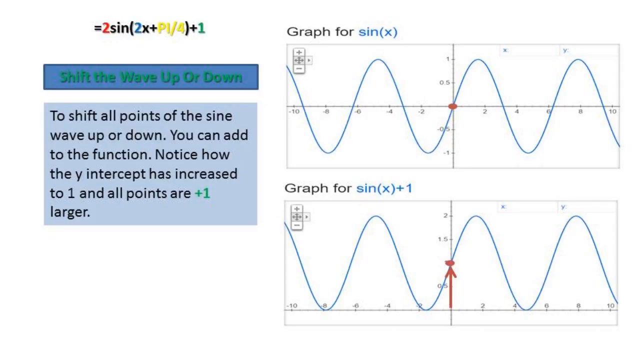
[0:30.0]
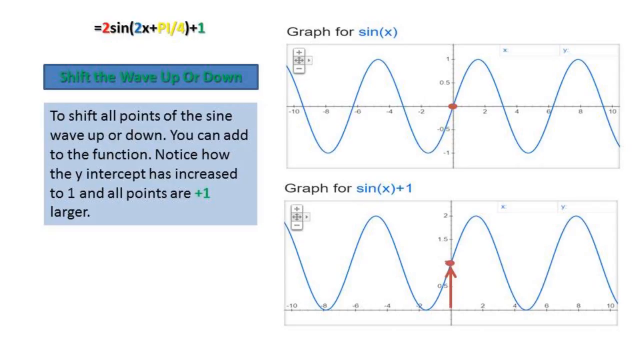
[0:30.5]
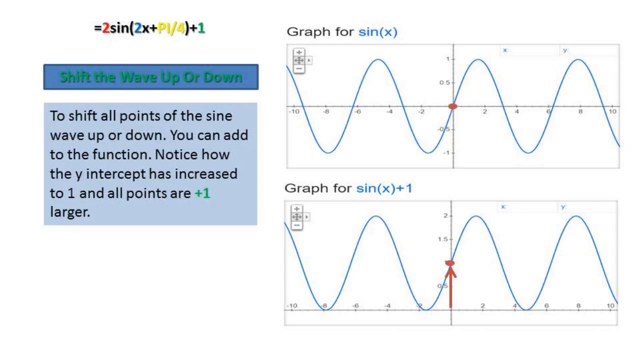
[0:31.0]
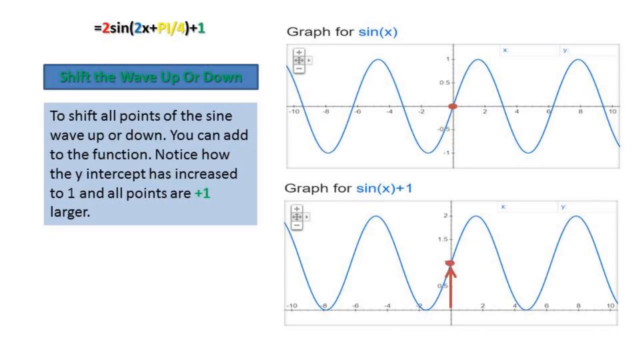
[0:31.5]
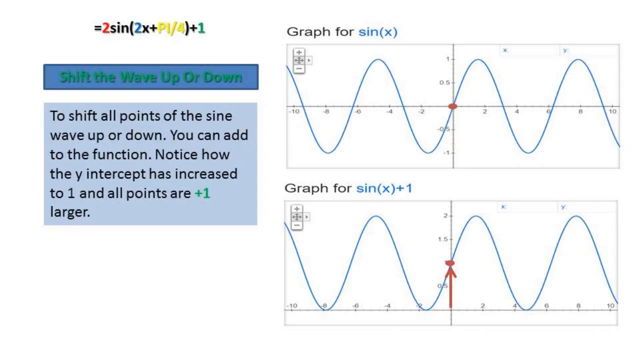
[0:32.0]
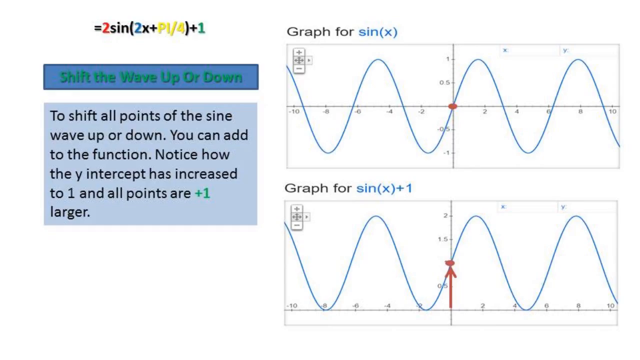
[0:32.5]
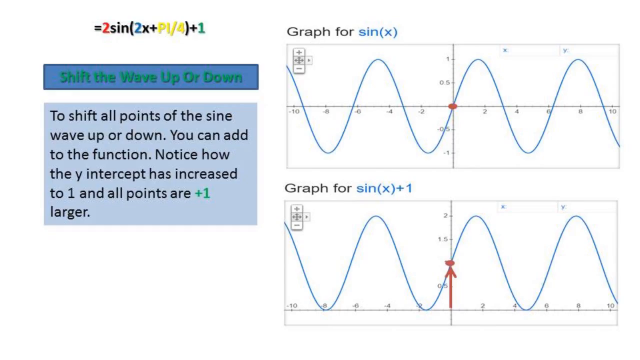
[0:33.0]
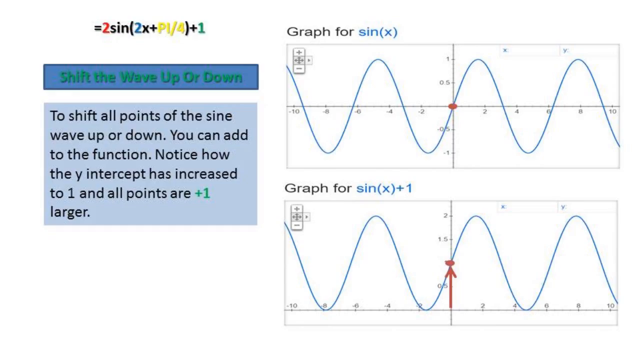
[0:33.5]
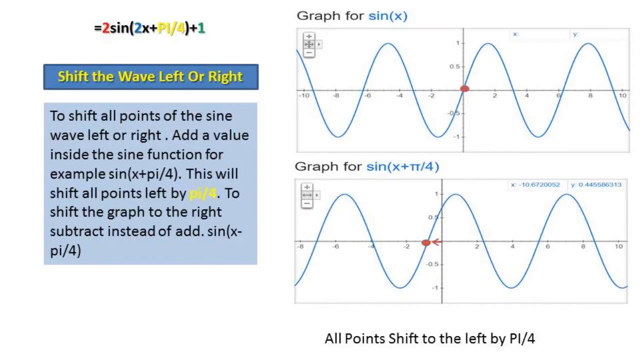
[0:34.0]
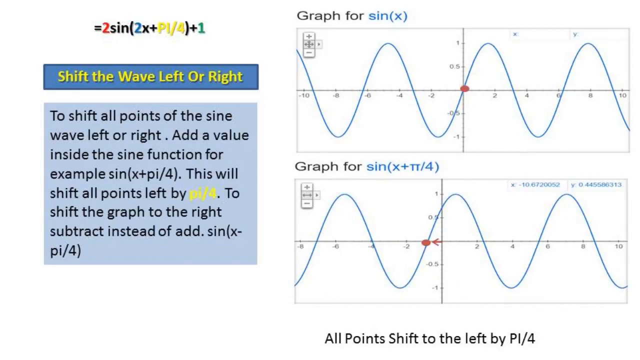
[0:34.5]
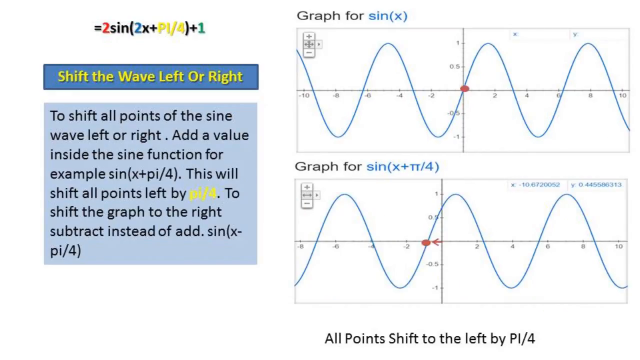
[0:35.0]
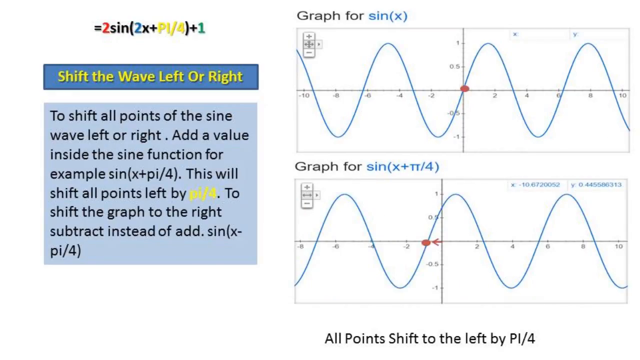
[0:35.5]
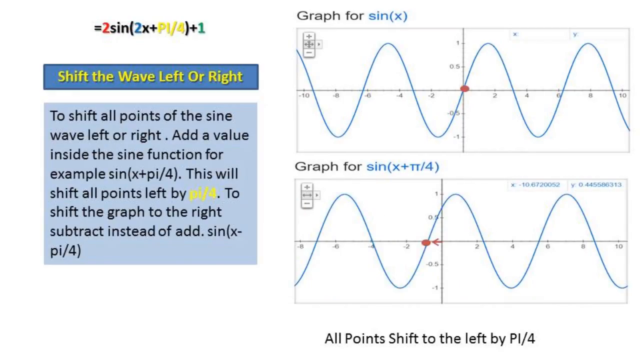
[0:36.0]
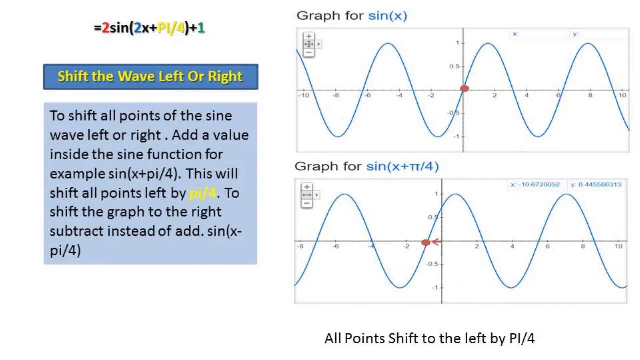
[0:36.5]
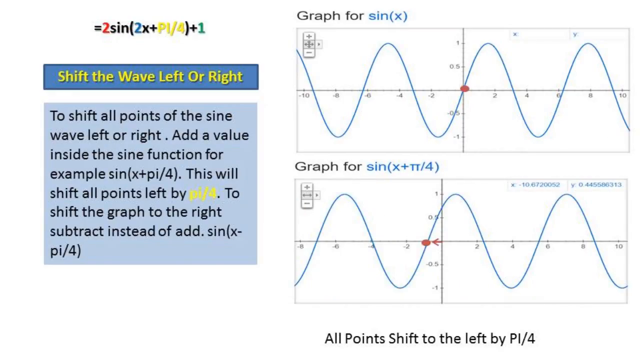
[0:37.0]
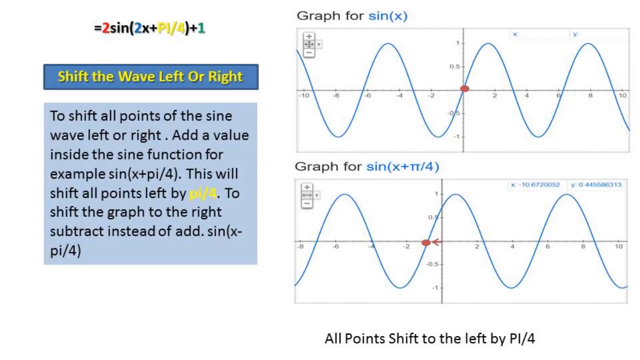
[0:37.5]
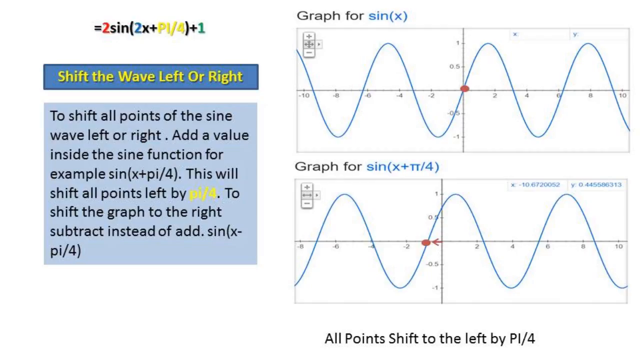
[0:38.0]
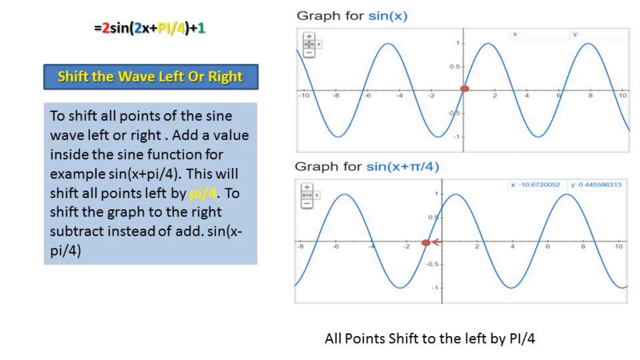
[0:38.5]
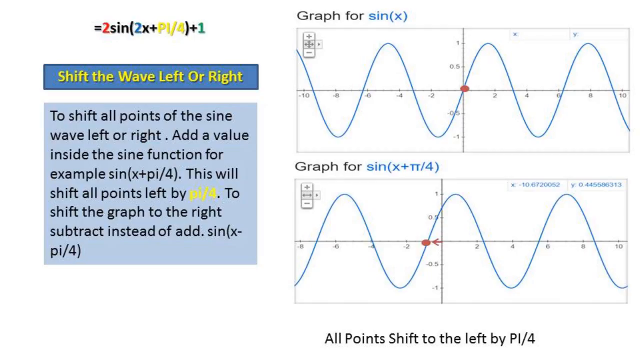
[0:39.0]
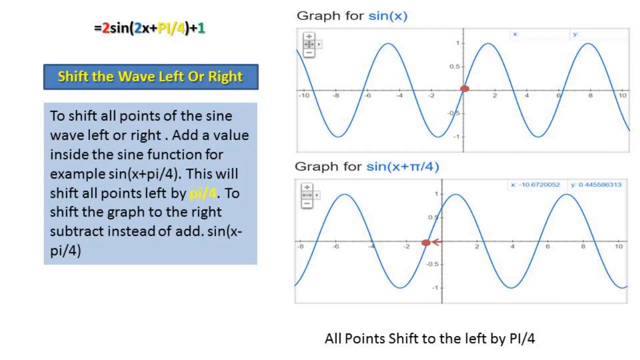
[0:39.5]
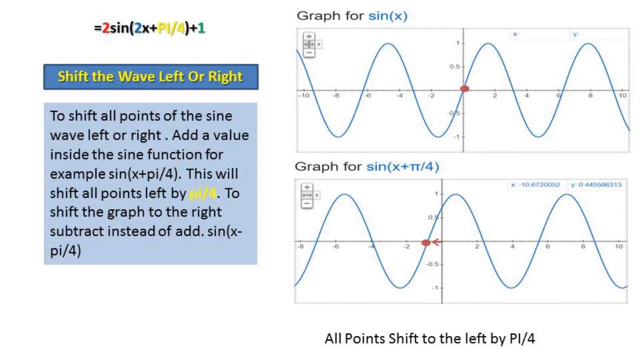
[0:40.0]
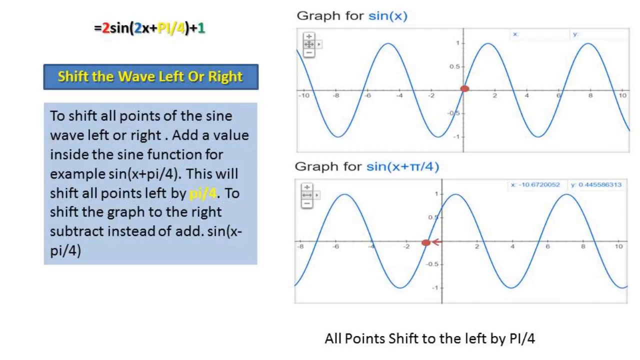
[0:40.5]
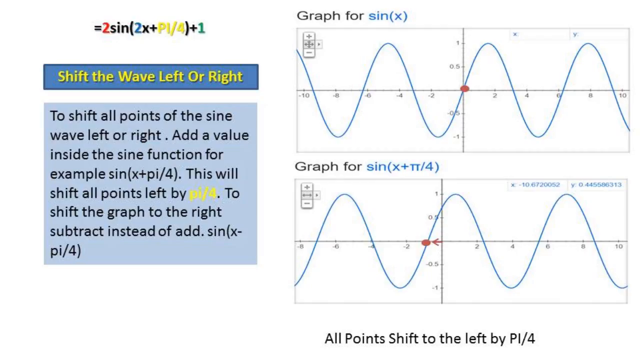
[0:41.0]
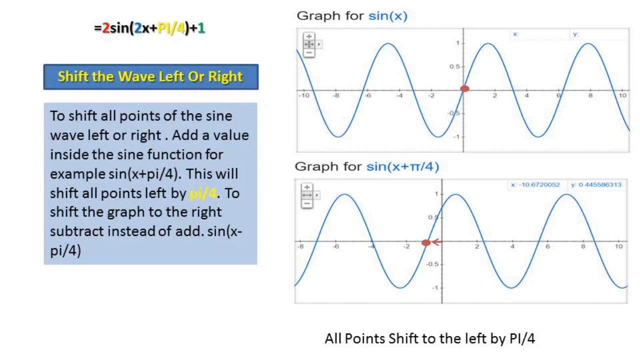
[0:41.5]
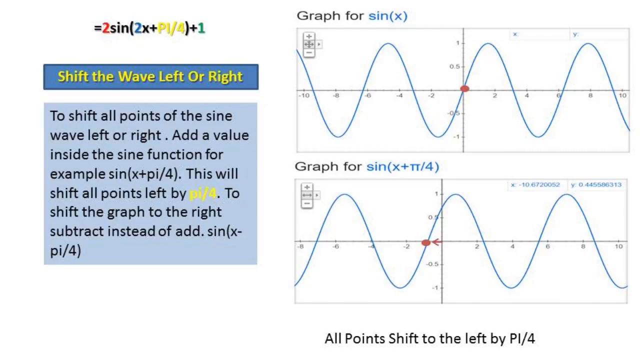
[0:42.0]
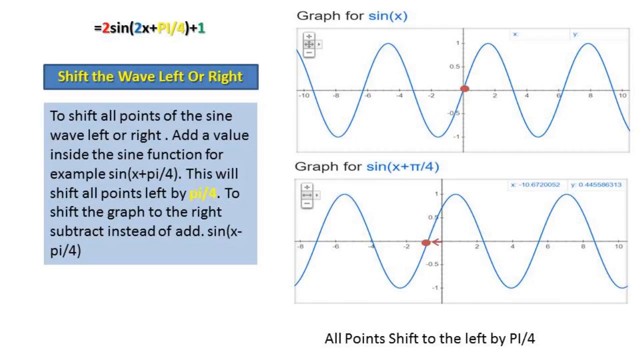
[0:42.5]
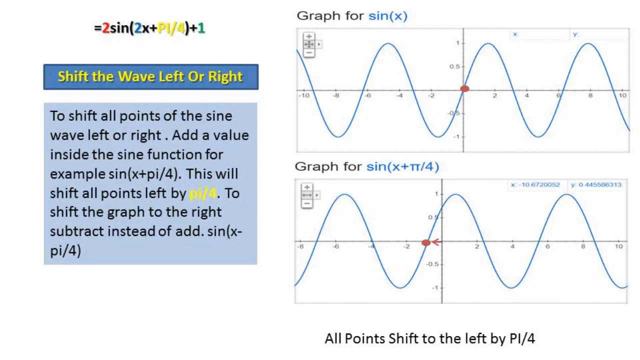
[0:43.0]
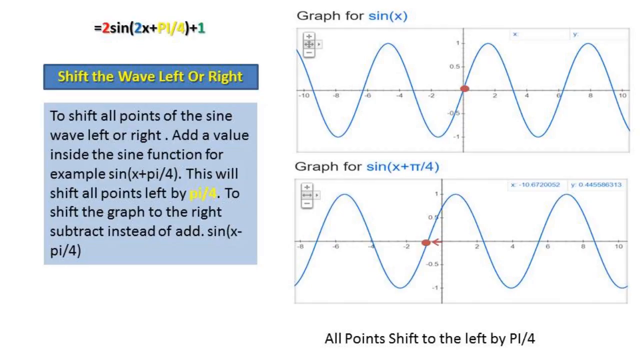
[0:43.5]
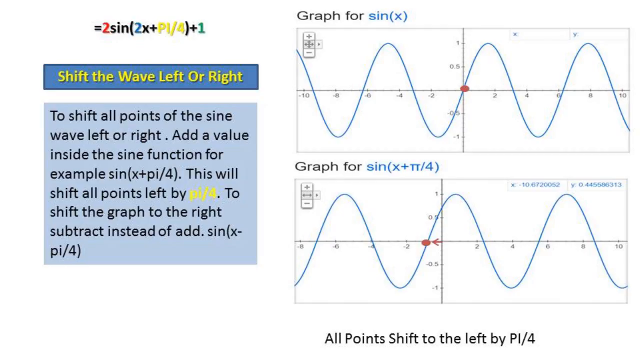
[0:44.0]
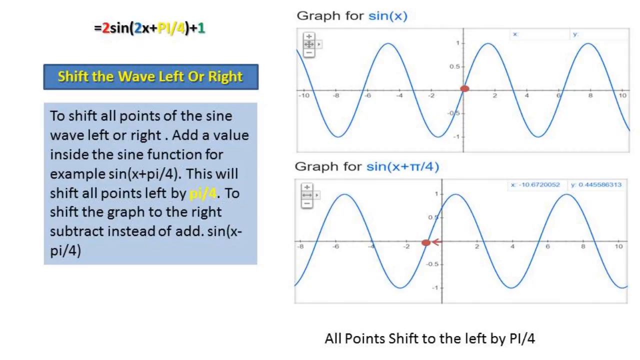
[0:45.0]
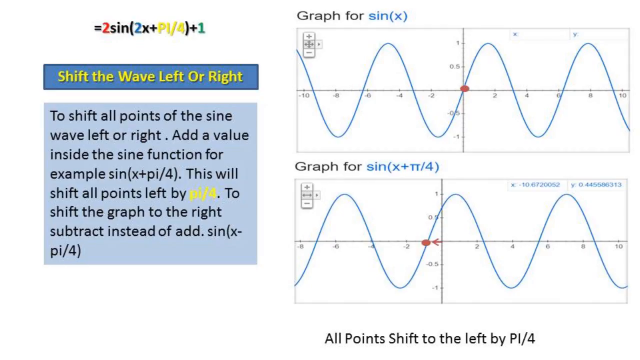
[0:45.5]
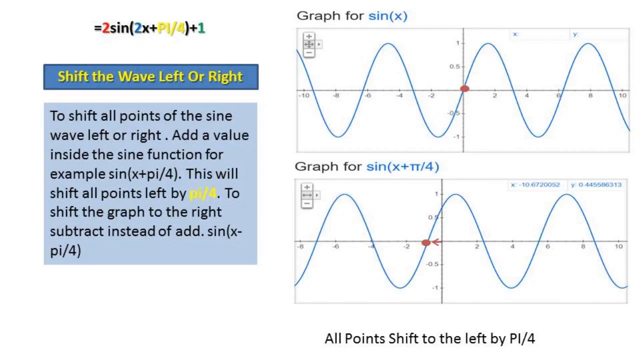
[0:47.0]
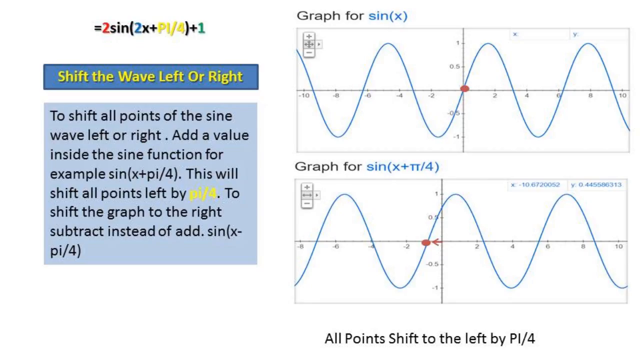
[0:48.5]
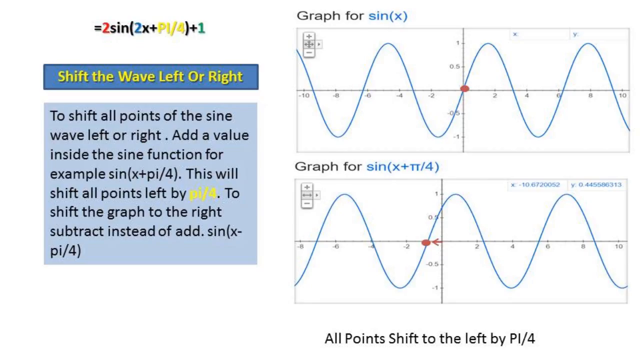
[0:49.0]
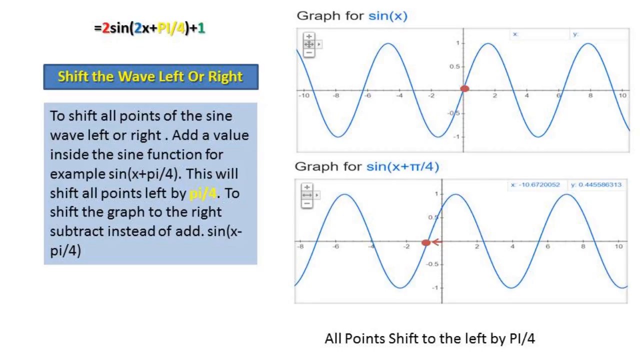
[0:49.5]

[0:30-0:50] Two graphs are shown, one for sin x and one for sin x + 1, and they are clearly different. On the left, text on a blue background says that to shift all points of the sine wave up or down, you can add to the function, and notes that the y-intercept has increased to one and all the points are one larger. The equation 2 sin(2x + π/4) + 1 is also visible. The next slide shows a graph for sin x and a graph for sin(x + π/4), with text explaining that to shift all points of the sine wave left or right, a value is added inside the sine function; for example, sin(x + π/4) shifts all points left by π/4, and to shift the graph to the right, you subtract instead of adding, as in sin(x − π/4). The two graphs are different. Then text reads "shift the wave left or right".